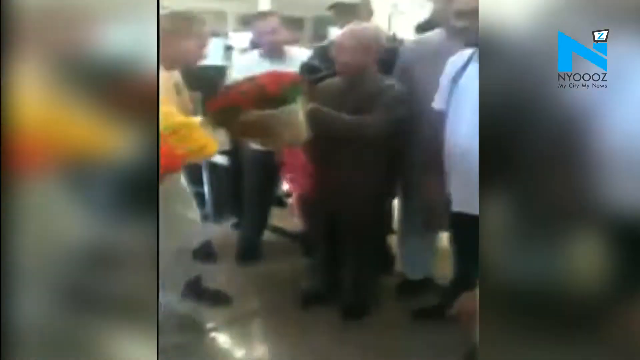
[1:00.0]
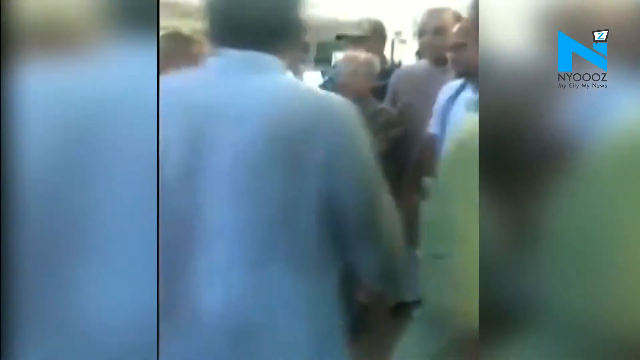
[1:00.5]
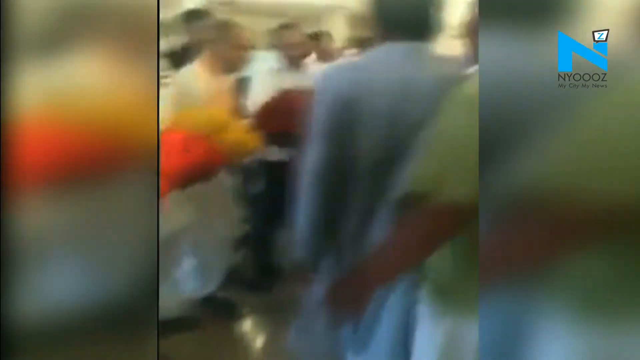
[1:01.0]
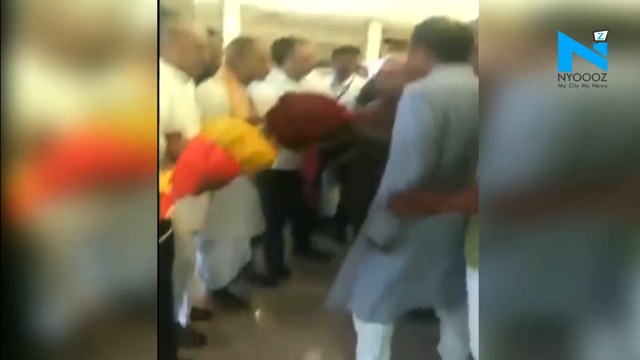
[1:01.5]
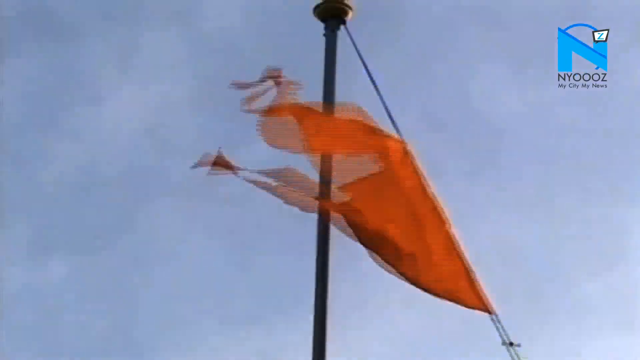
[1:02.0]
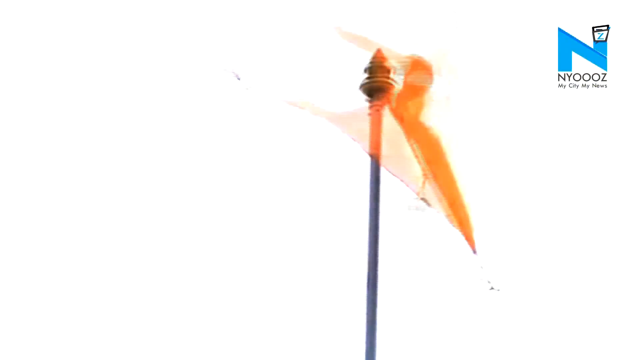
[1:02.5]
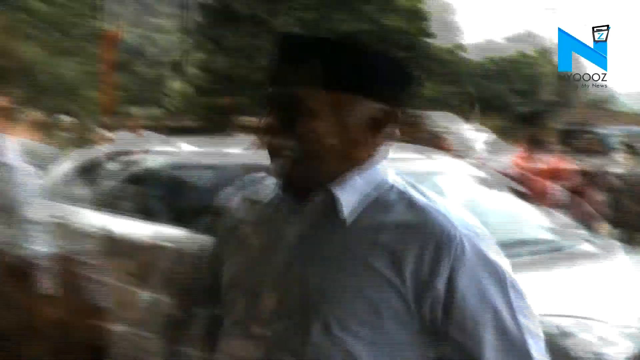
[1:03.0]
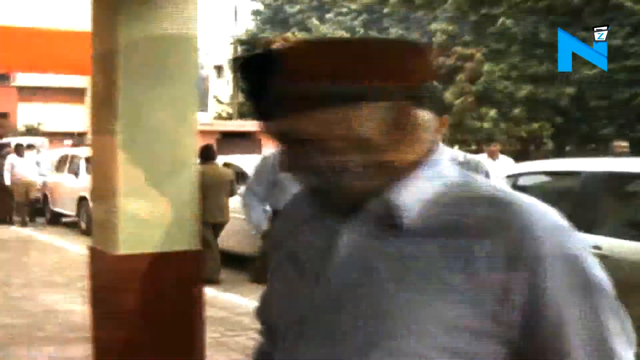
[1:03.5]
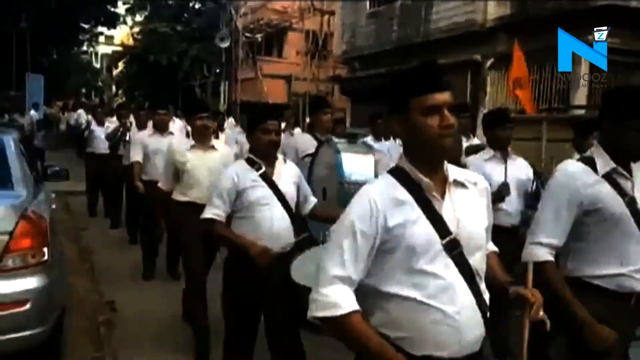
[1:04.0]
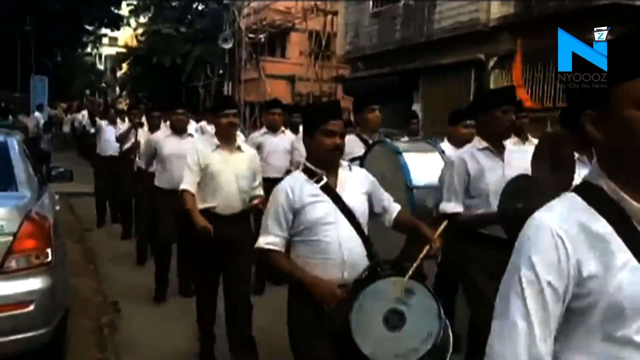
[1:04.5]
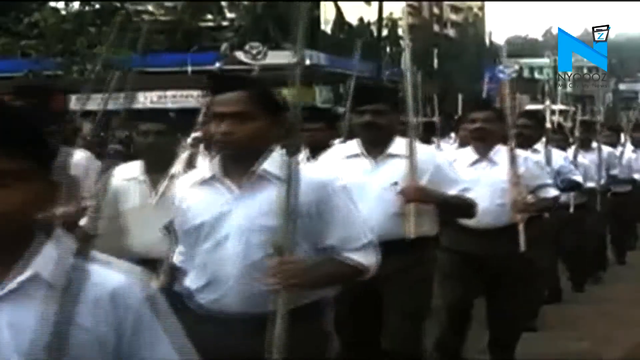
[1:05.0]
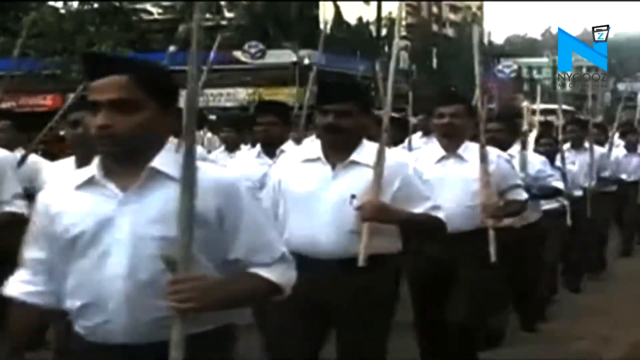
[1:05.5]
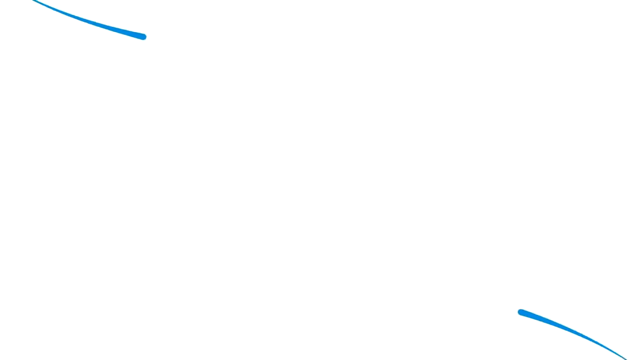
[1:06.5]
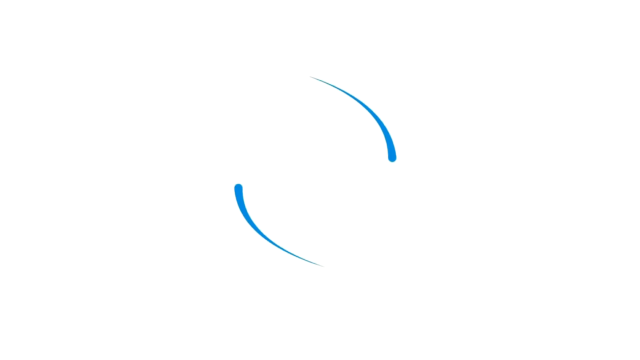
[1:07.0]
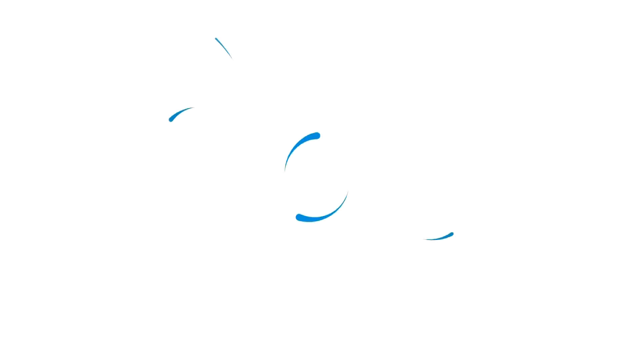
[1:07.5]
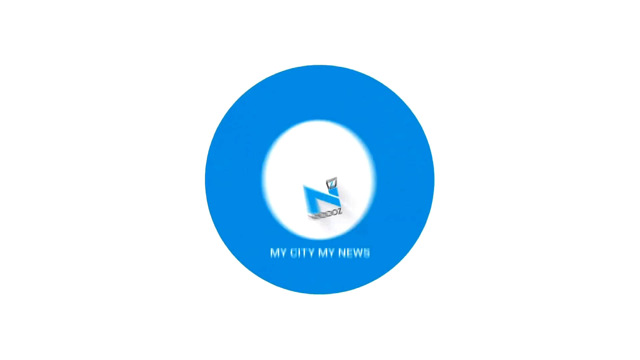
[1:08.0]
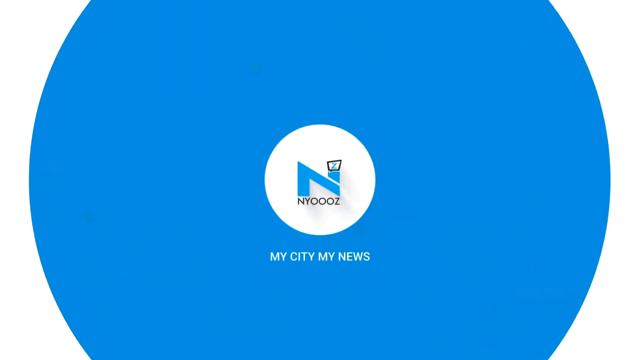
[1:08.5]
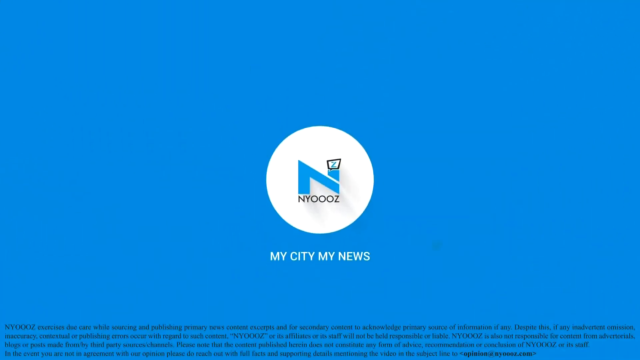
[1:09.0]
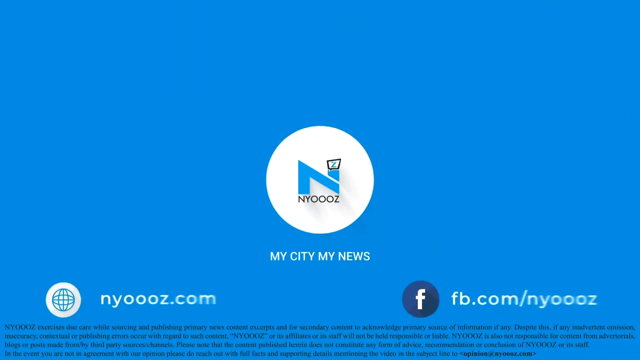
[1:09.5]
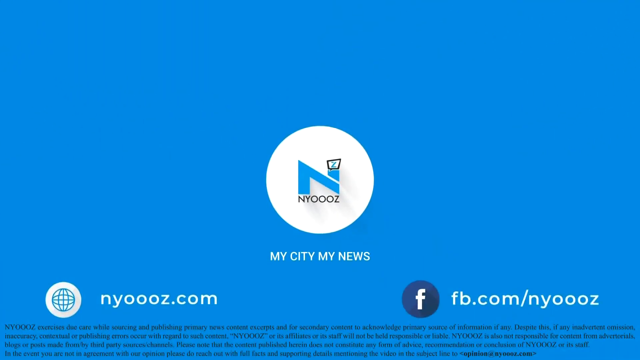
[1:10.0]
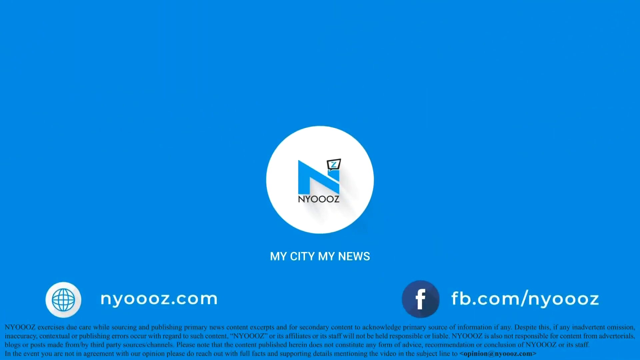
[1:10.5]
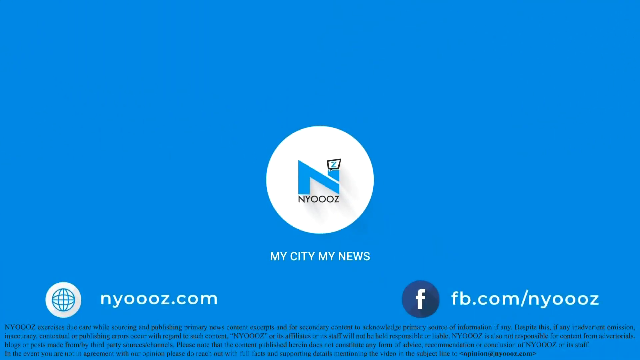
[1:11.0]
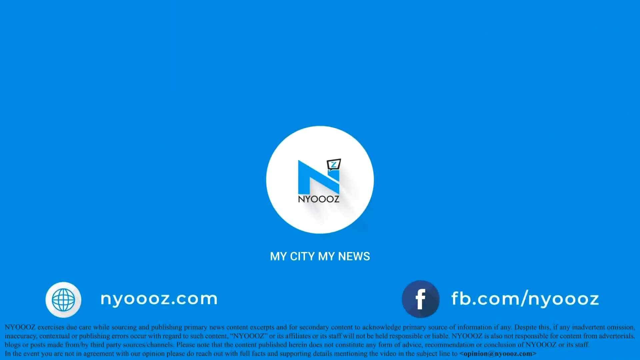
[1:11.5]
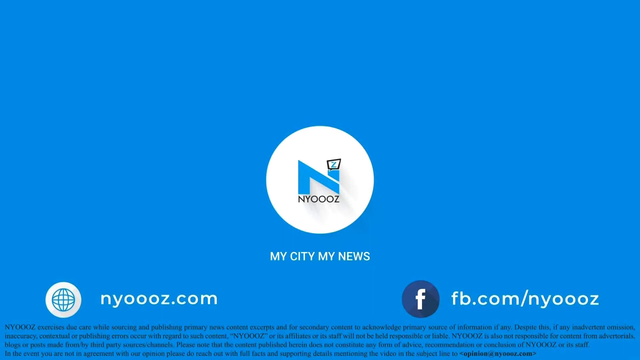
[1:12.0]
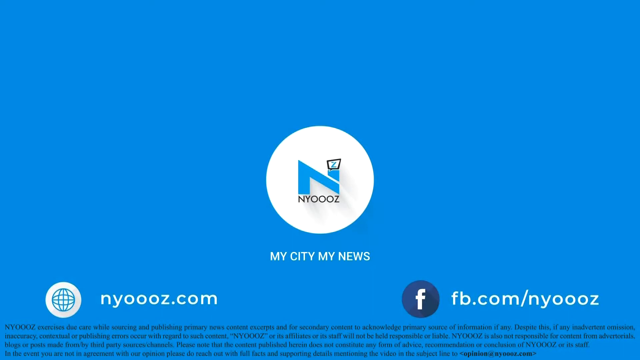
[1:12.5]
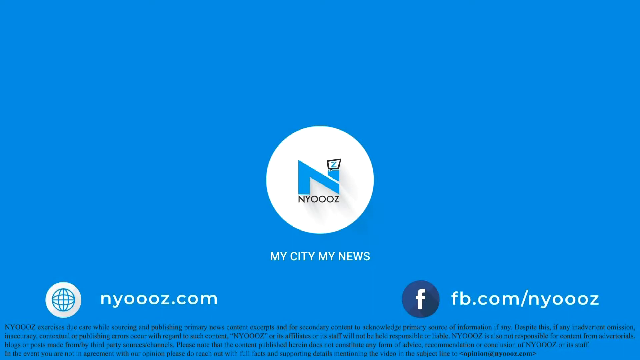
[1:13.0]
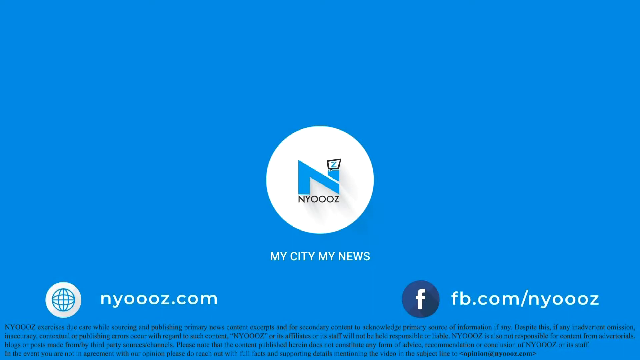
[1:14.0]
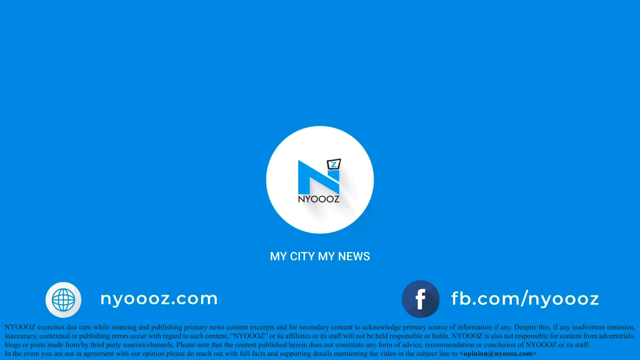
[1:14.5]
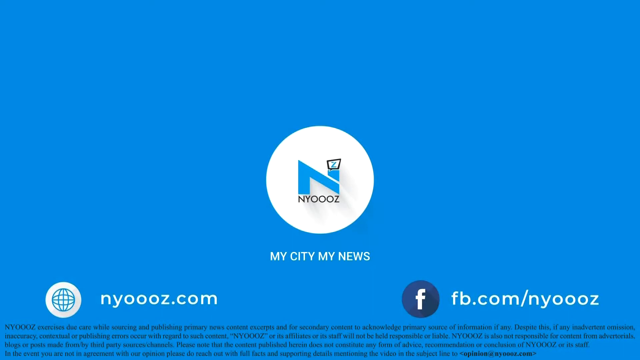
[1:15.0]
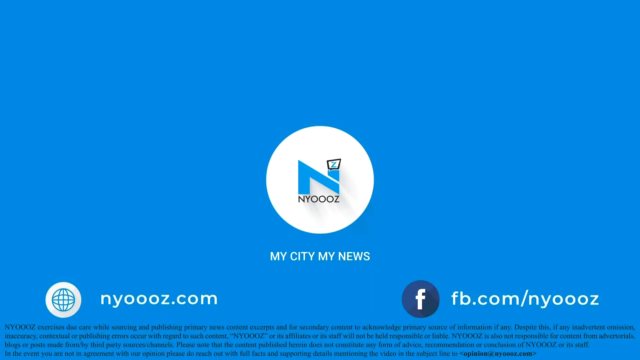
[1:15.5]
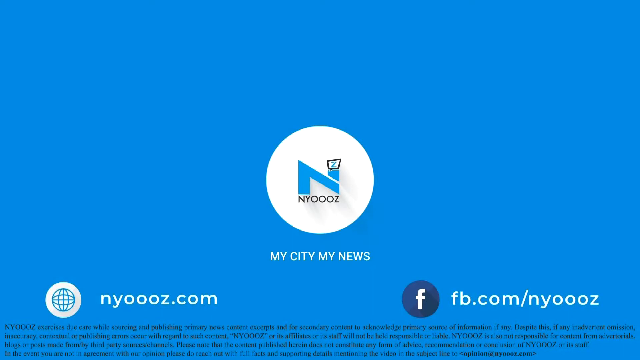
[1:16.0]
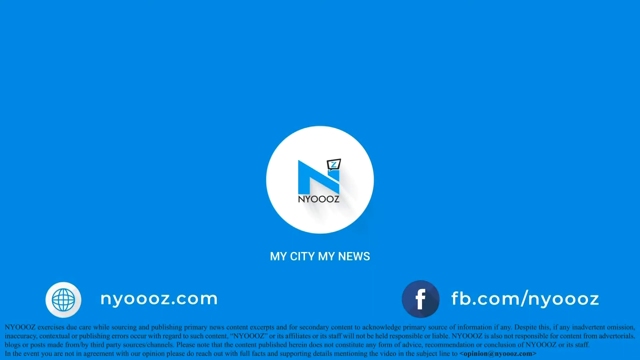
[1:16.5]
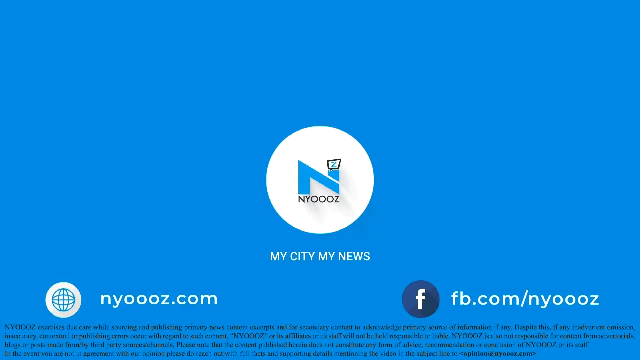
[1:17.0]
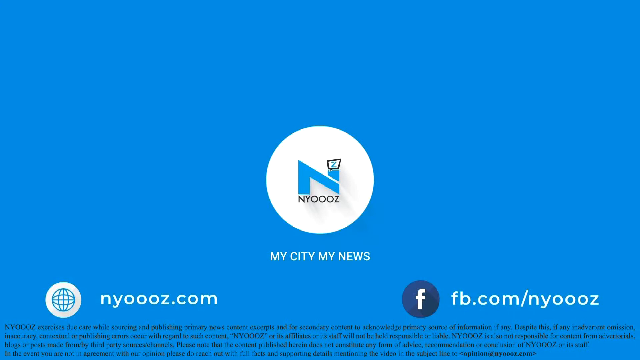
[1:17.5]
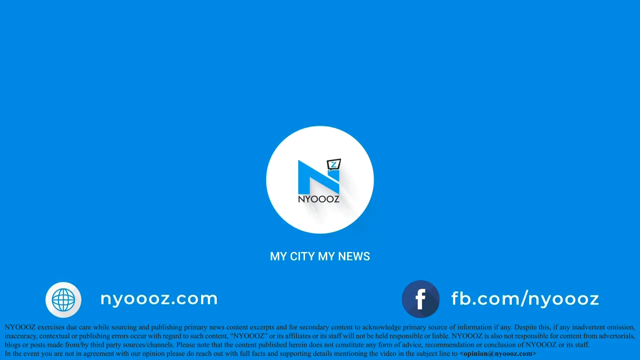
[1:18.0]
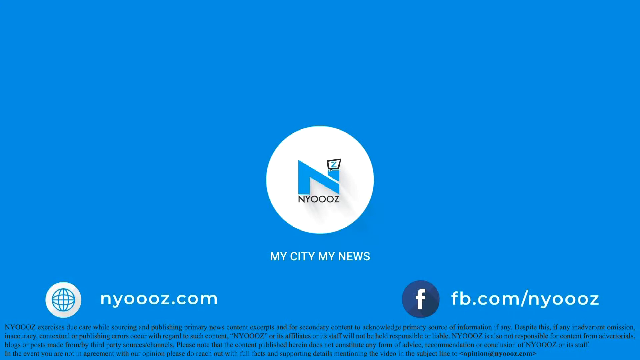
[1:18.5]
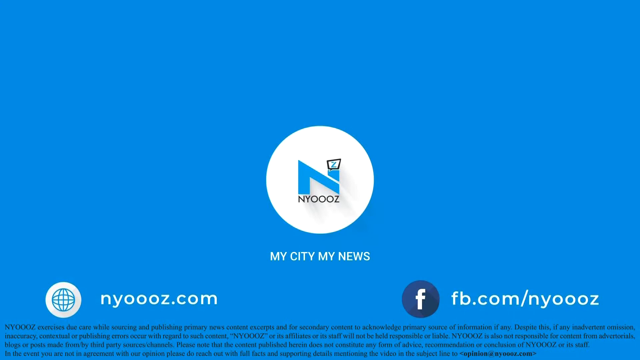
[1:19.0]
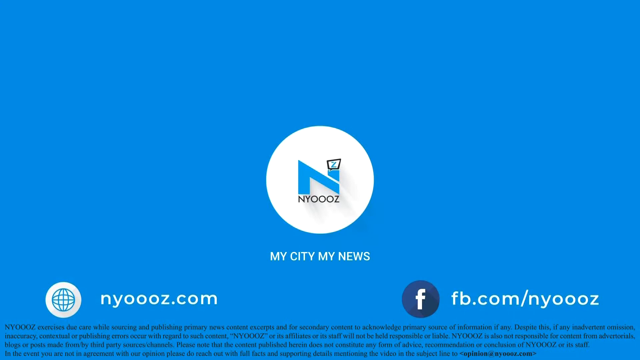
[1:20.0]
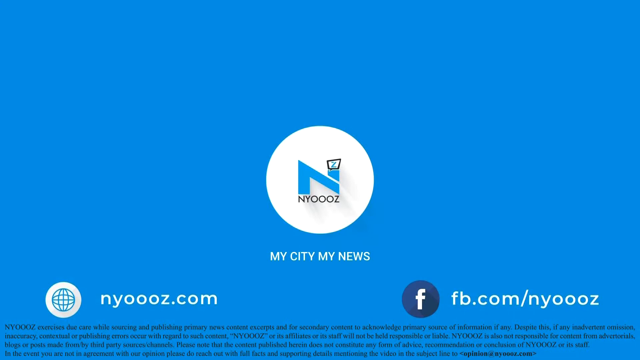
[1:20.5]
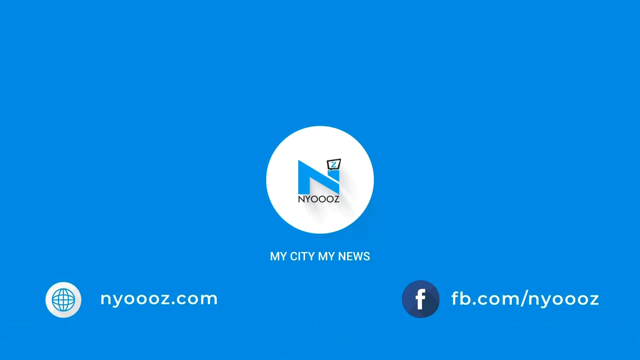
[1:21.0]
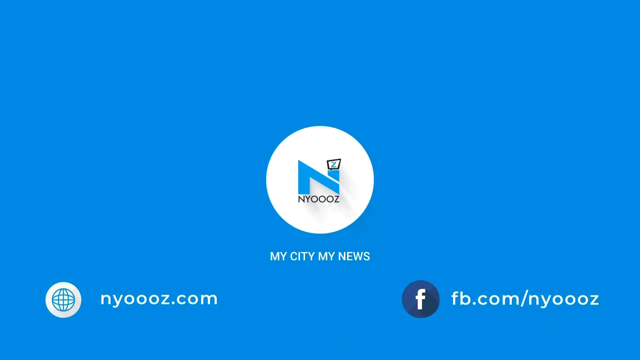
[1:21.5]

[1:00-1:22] An image shows an elderly man receiving flowers, surrounded by a group of men. A large group of men walks in formation down a street; some wear drums around their shoulders and hit them with drumsticks, and some hold cymbals. All wear white shirts, black trousers and black hats, and some hold sticks while walking. Buildings are visible in the background. In the top right of the screen is a stylized blue N with a white box containing a blue Z on top of it, and "NY000Z" written underneath. The screen turns white, and two blue stripes emerge in the middle and fill the entire screen until it is completely blue. In the middle of the blue screen is a white dot containing a blue letter N, with a blue letter Z on top of the N; the Z has a black square border around it. Underneath the N is "NYOOOZ", and beneath the white dot is "my city, my news". At the bottom right is the Facebook symbol with "fb.com/NYOOOZ" next to it, and on the left is the internet symbol with the URL "nyoooz.com" next to it.